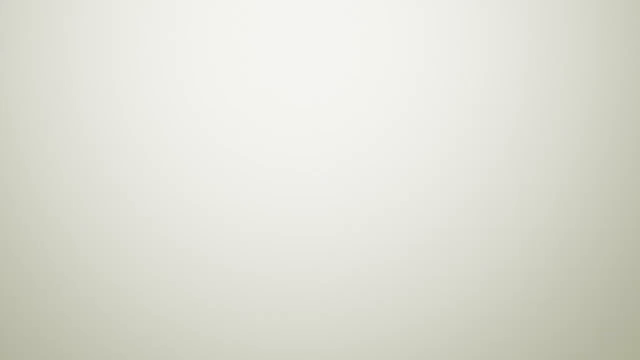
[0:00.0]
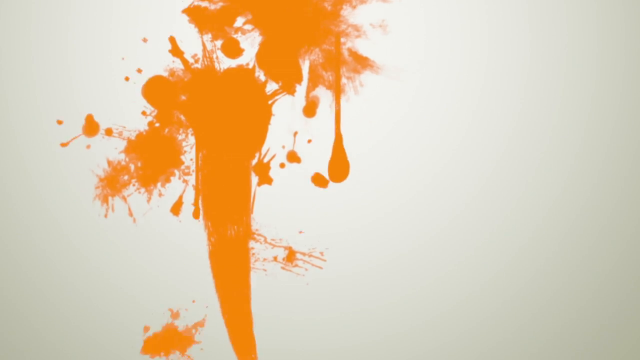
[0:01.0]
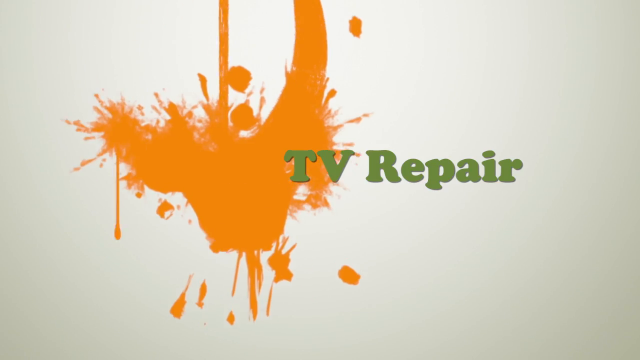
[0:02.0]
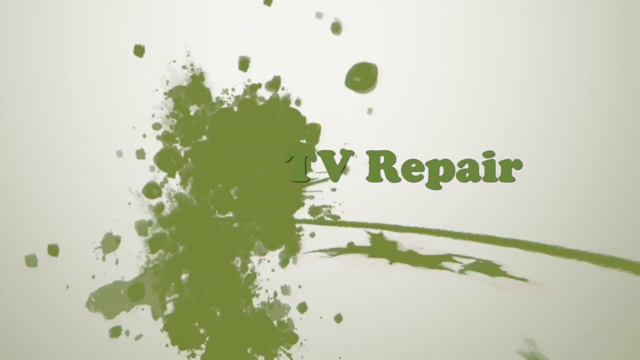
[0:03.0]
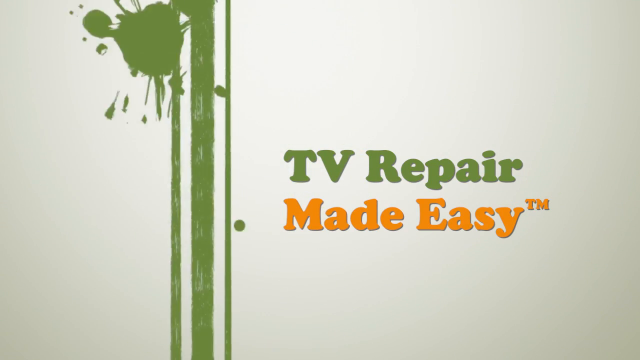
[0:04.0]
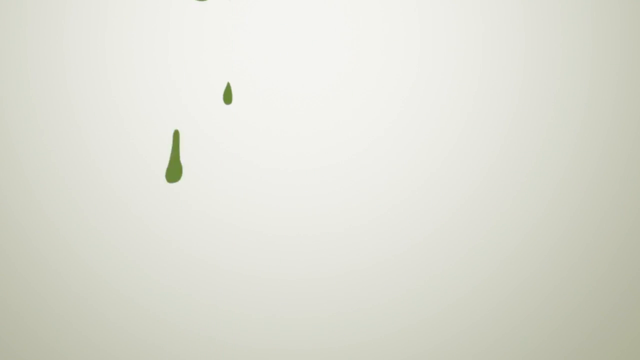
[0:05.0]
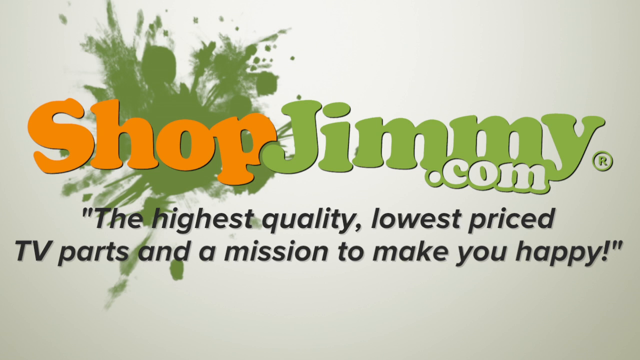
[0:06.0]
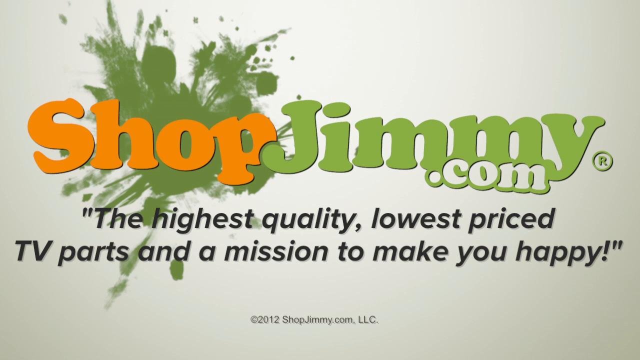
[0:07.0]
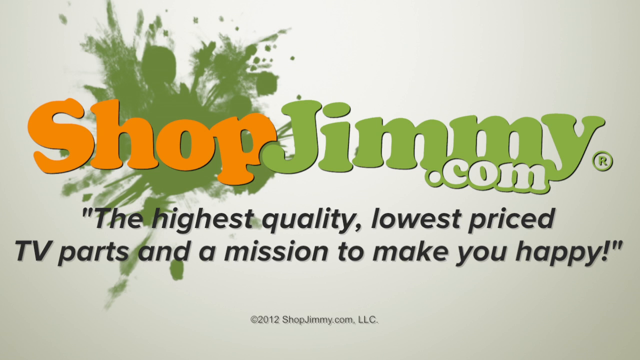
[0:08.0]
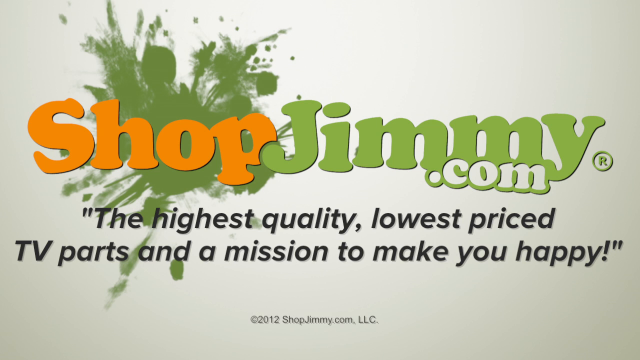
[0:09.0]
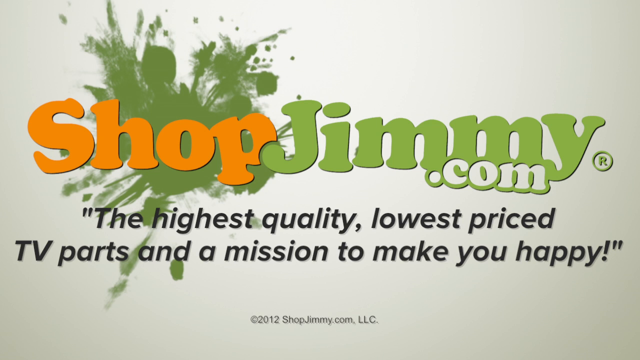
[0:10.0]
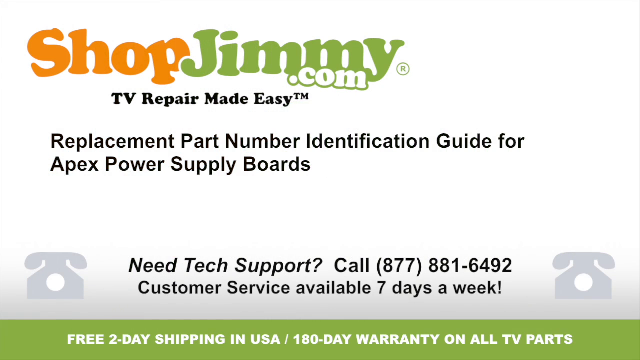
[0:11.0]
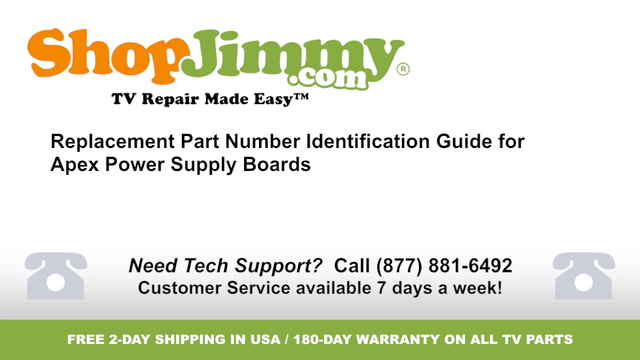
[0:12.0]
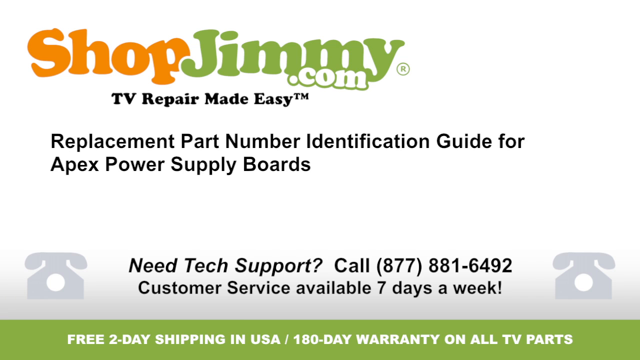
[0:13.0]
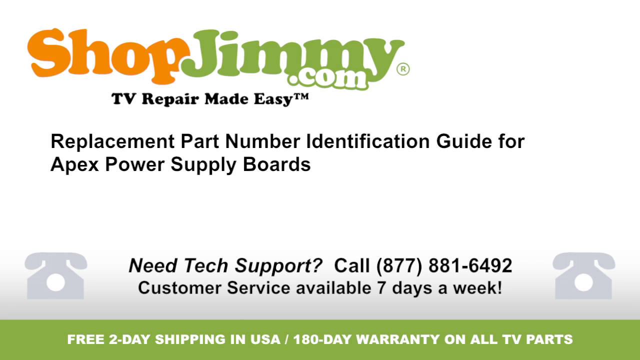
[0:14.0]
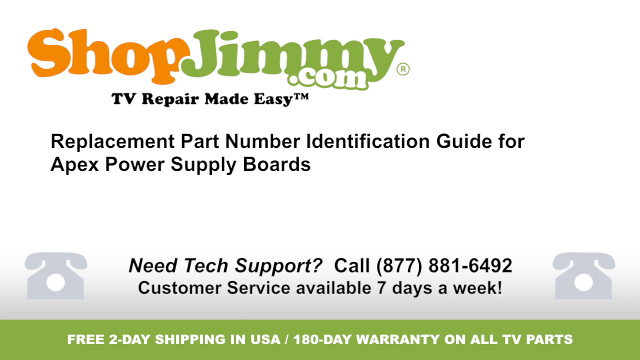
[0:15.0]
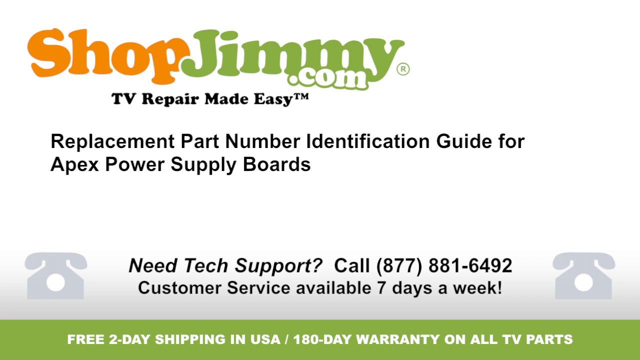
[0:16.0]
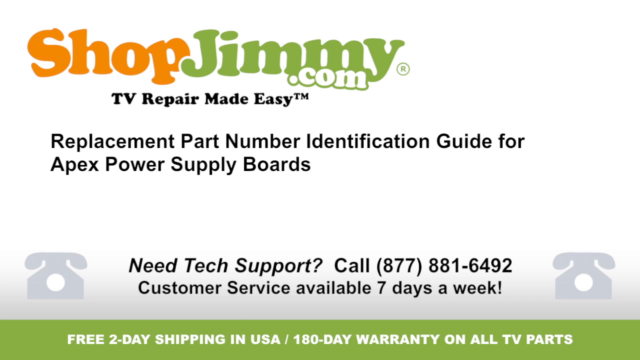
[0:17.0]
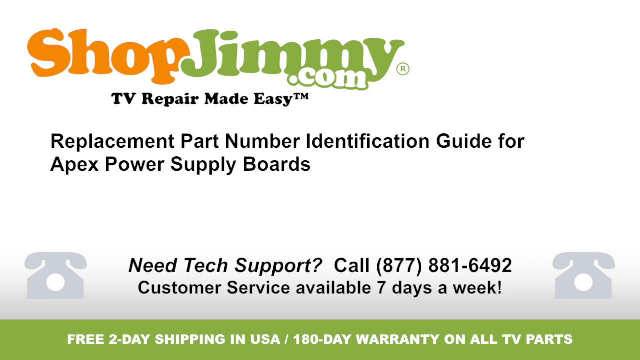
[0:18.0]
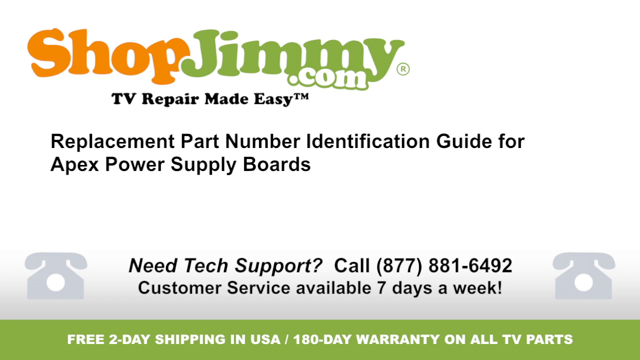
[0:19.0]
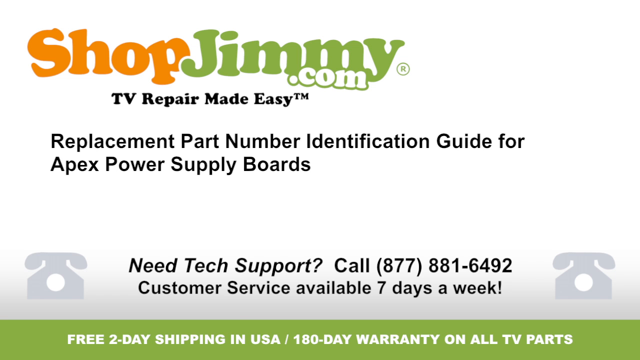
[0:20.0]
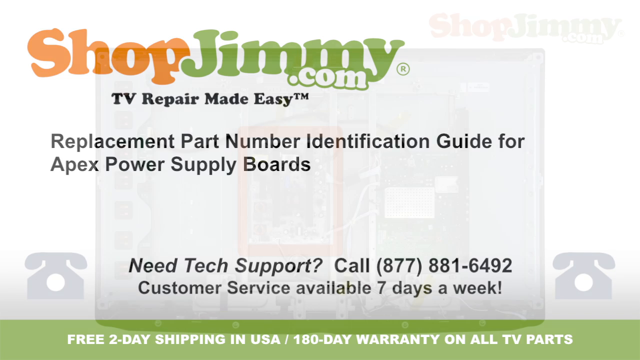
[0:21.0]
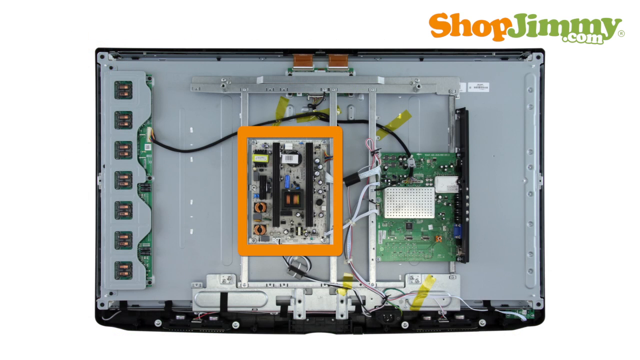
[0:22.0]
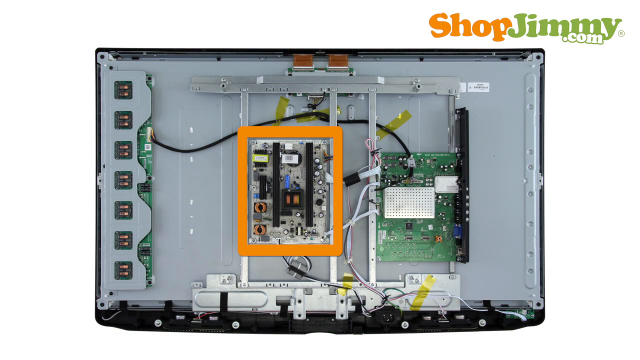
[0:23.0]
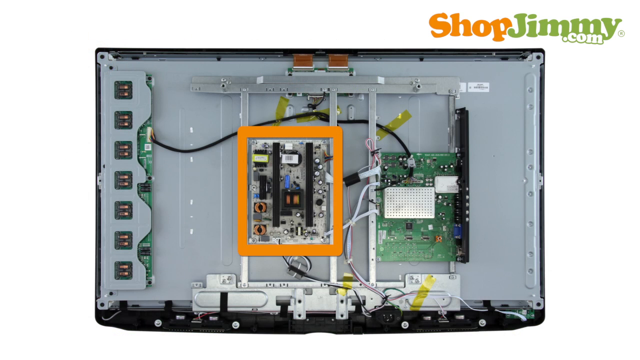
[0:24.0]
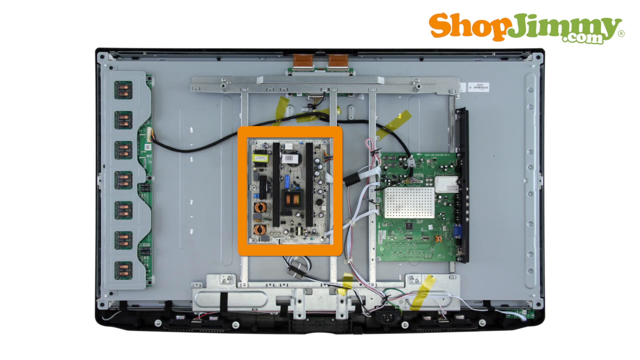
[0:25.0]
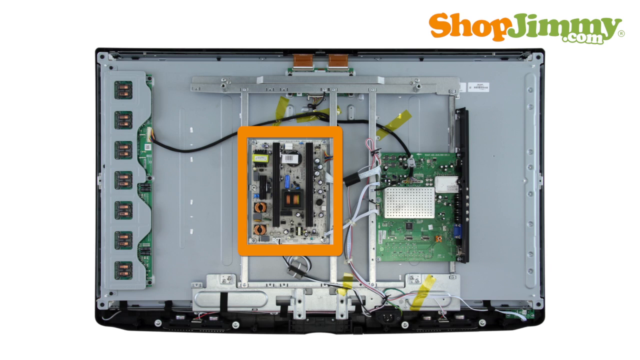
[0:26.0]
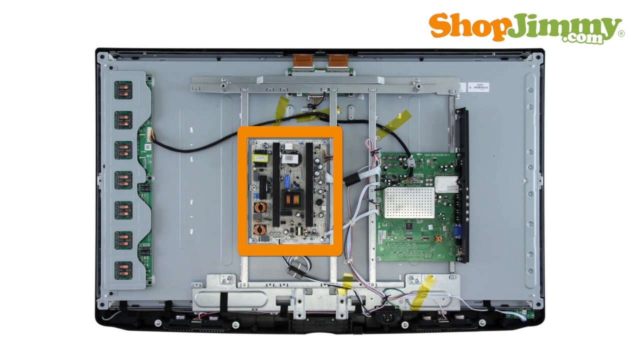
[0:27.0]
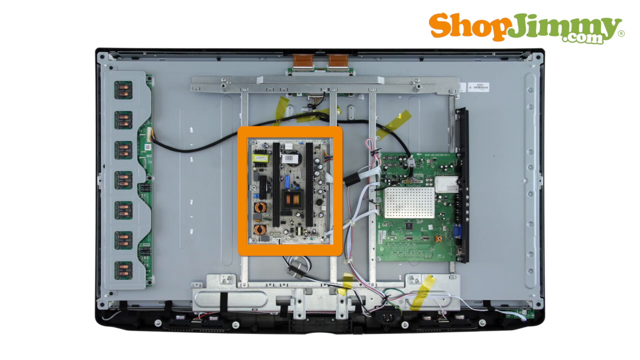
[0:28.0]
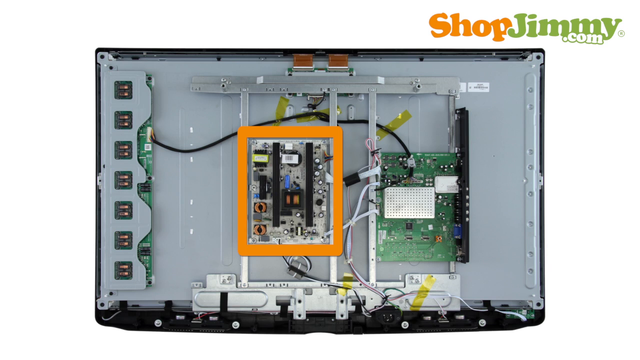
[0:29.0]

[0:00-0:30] The video opens on a white background. Splashes of orange paint appear and rapidly sweep downwards, along with a title card in green text that reads "TV Repair". The paint turns green and keeps splattering across the white background as new text appears reading "Made Easy" with a trademark symbol. Finally the text changes to read "ShopJimmy.com. The highest quality, lowest priced TV parts". The video cuts to a card with several lines of text on a white background: "ShopJimmy.com TV Repair Made Easy. Replacement Part Number Identification Guide for Apex Power Supply Boards. Need tech support? Call 877-881-6492. Customer service available 7 days a week." A green banner at the very bottom reads "Free 2-Day Shipping in USA / 180-Day Warranty on All TV Parts". Next comes a photograph of the back of a flat-screen TV with the back panel removed, exposing the panels, parts and chips inside. A URL in the top left corner reads "shopjimmy.com". The interior is essentially a gray piece of metal with various green computer chips and other internal components. On the left, various plugs are set into a bracket that is also gray, and a black wire runs from there through the center toward another computer chip on the right side.